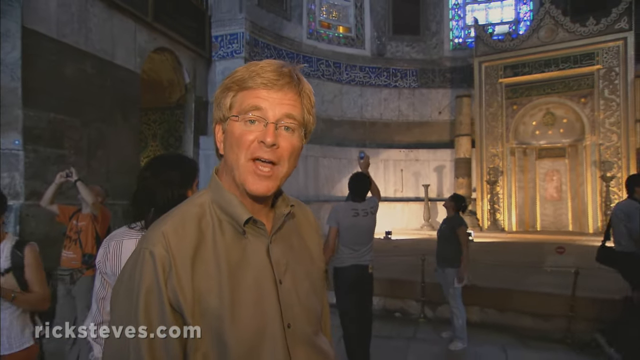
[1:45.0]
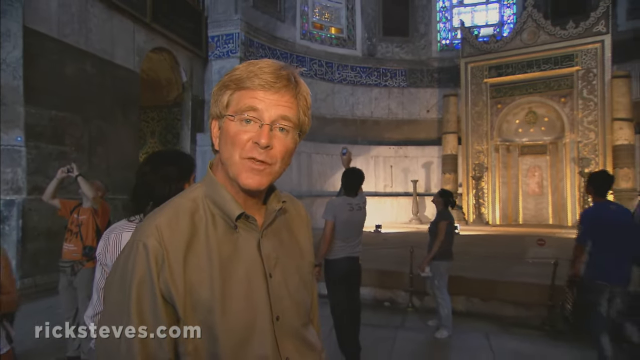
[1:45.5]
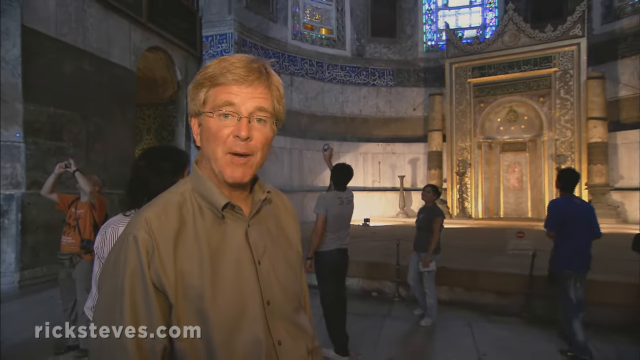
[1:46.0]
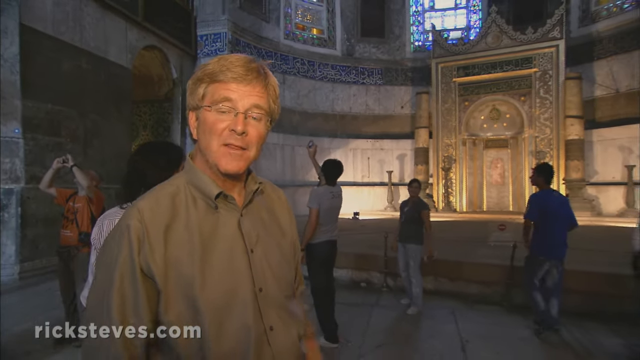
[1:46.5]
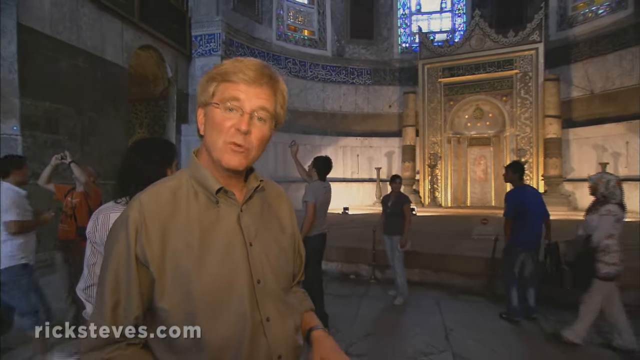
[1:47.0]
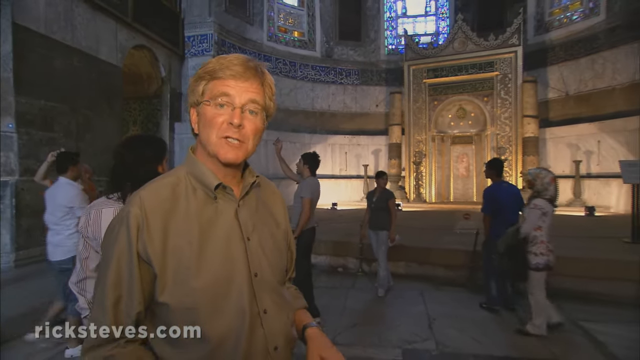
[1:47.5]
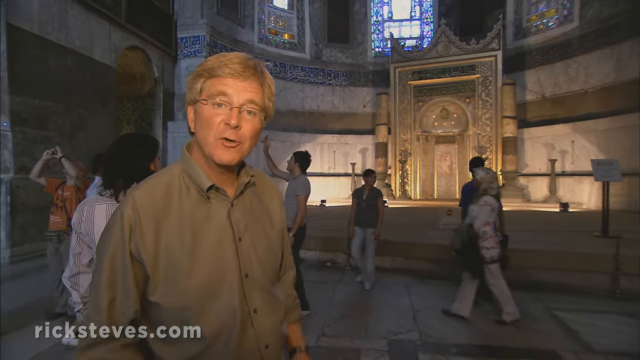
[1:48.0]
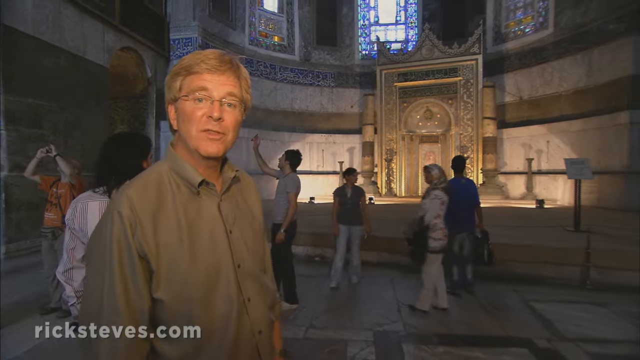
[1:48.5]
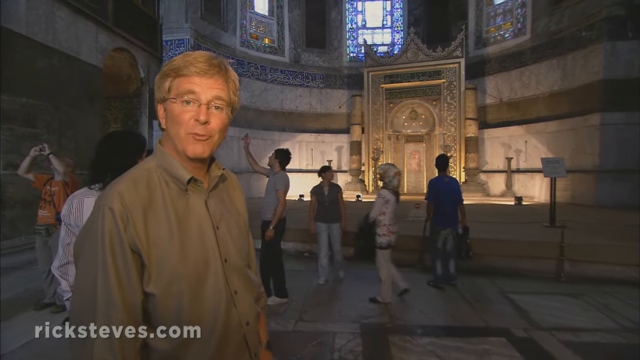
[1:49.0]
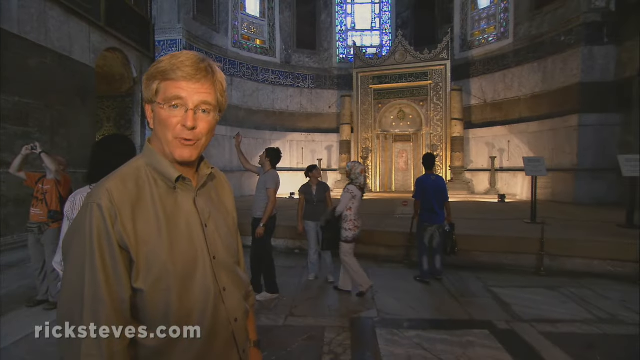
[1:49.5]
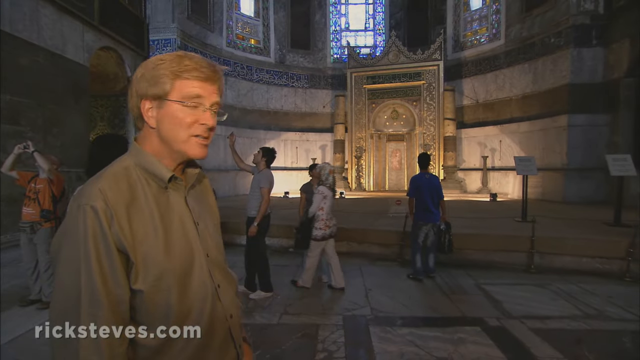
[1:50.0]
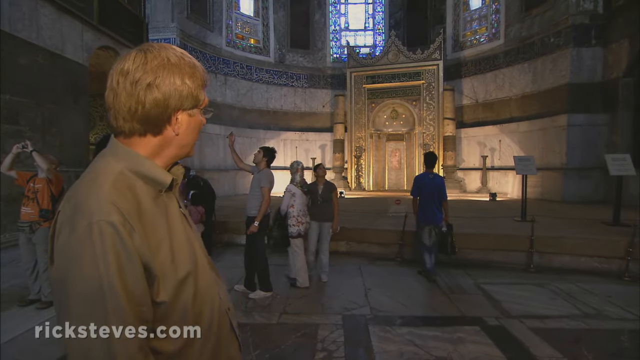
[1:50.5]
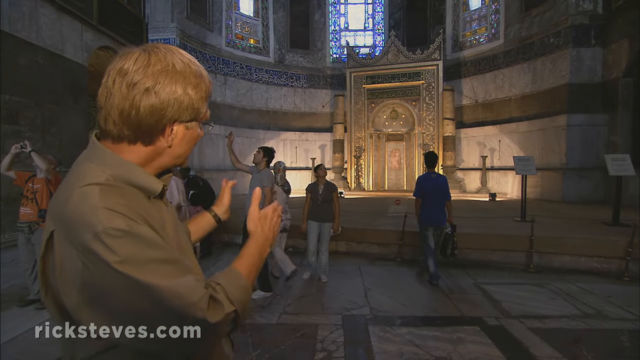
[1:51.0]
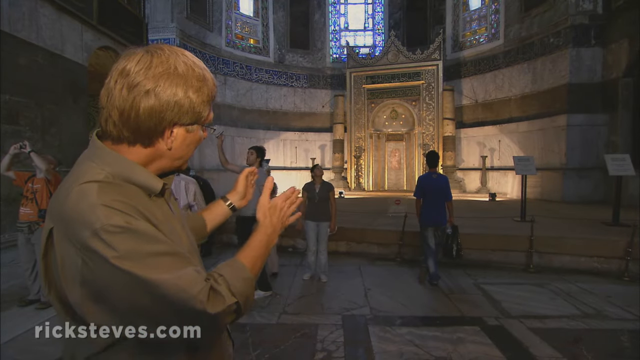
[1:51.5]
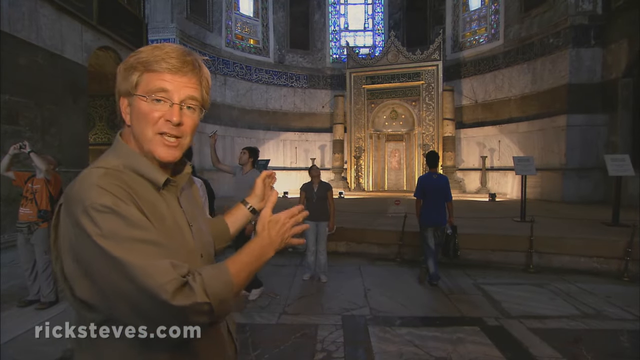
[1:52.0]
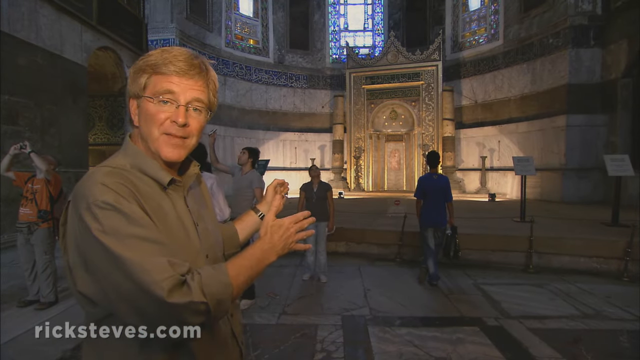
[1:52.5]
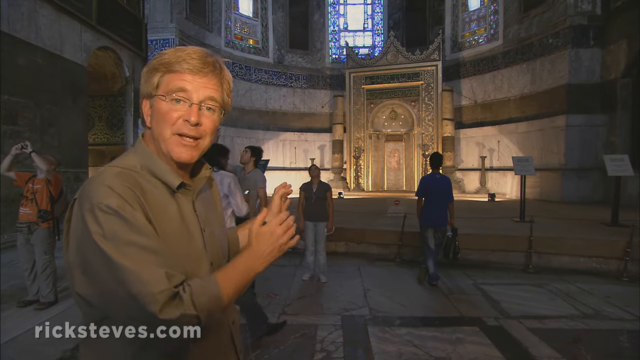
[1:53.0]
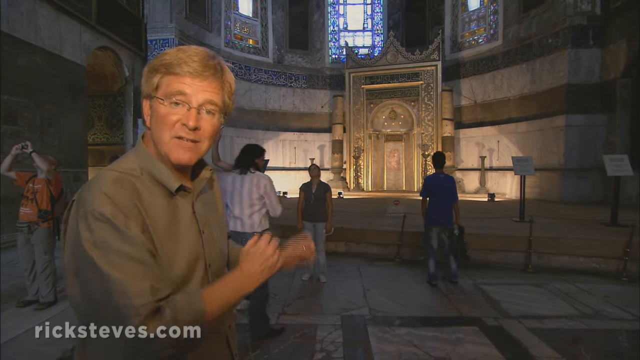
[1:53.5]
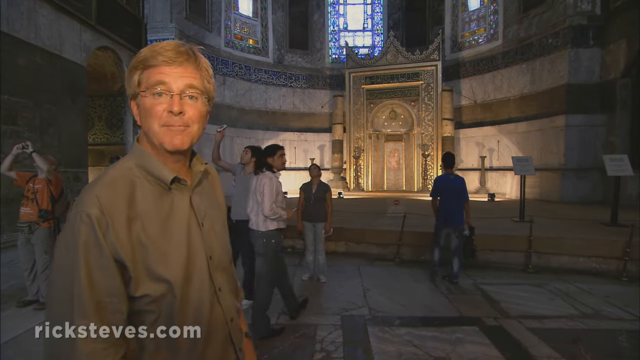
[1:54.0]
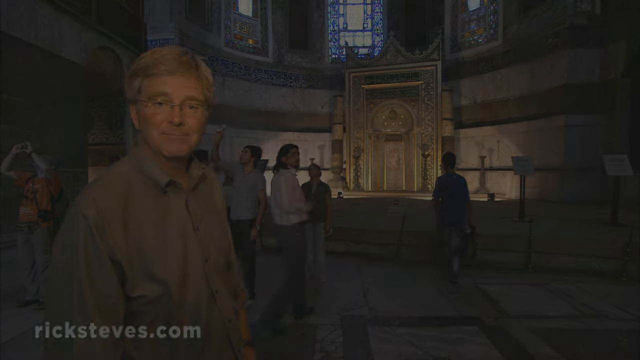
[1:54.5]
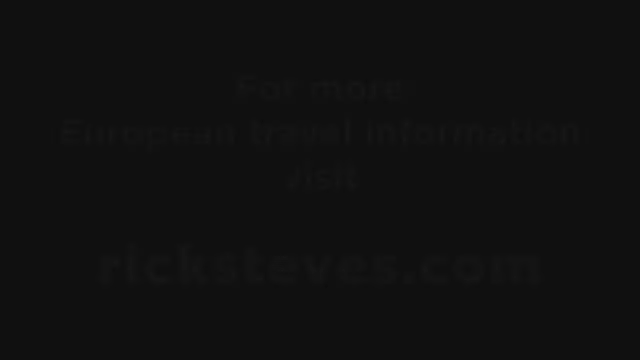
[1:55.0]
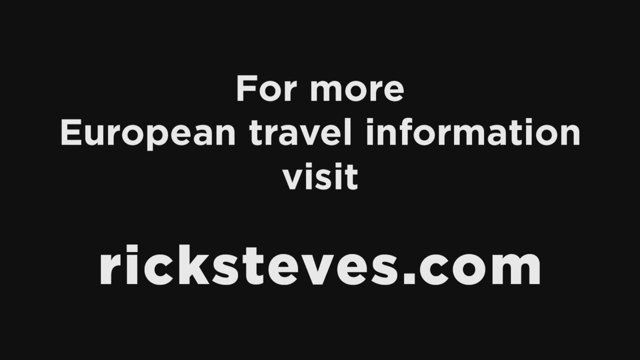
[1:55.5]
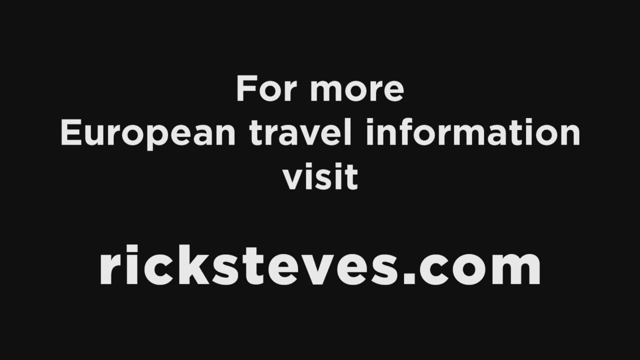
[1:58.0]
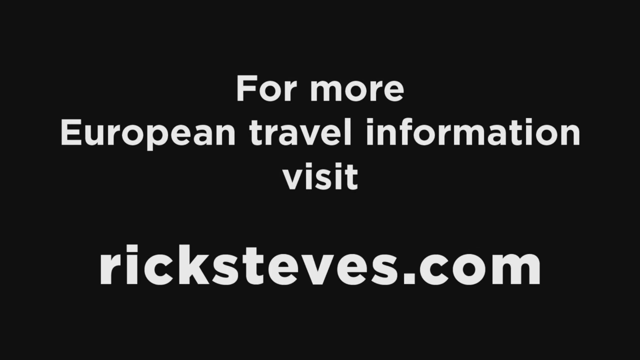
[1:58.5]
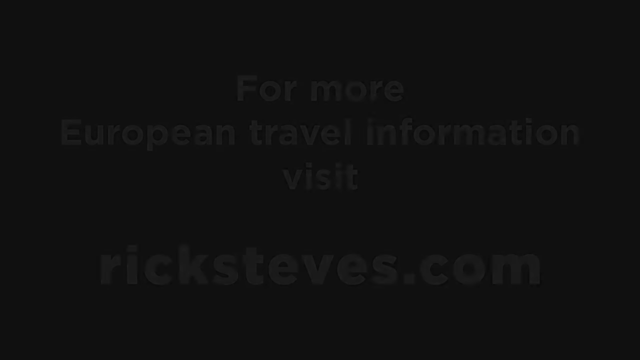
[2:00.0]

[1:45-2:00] Rick Steves is still talking. In the middle of what seems to be an altar, probably the hexagonal structure shown earlier, is the face of a man who seems to be a redhead with a mustache. The altar has four really small pillars, and on top of it is a triangle- or crown-shaped element; it is apparently a place of worship. Signs tell people not to cross, so visitors can only look at it from a distance. Many tourists look up and take pictures. The video ends with the text "for more european travel information visit ricksteves.com".